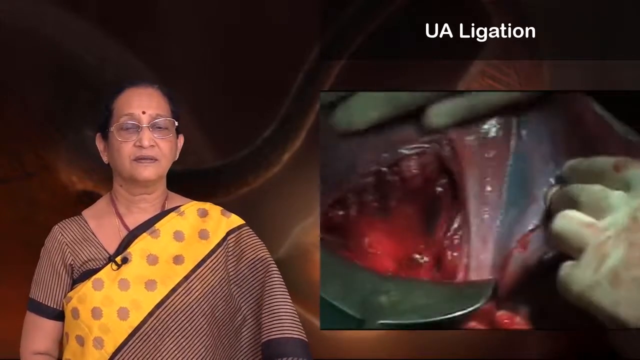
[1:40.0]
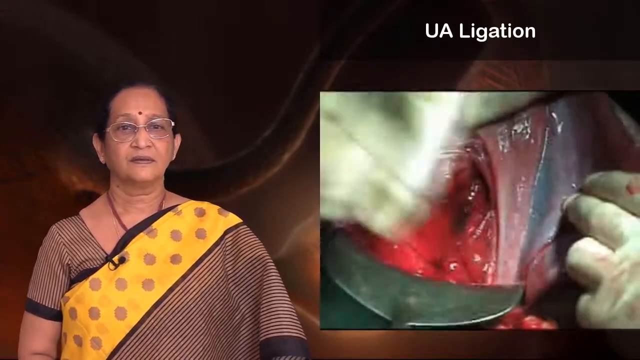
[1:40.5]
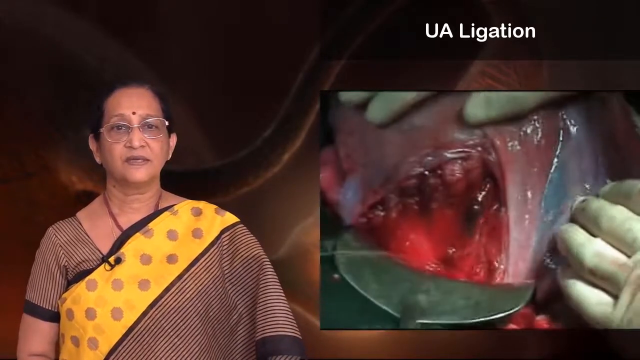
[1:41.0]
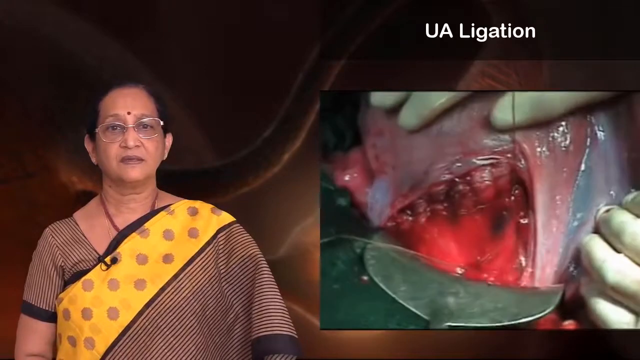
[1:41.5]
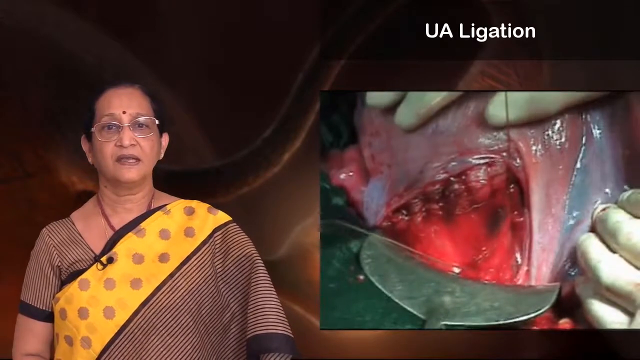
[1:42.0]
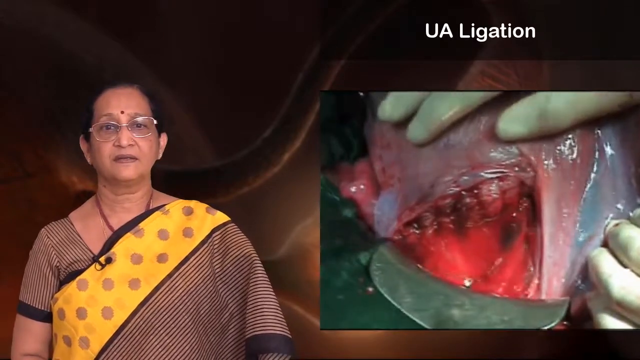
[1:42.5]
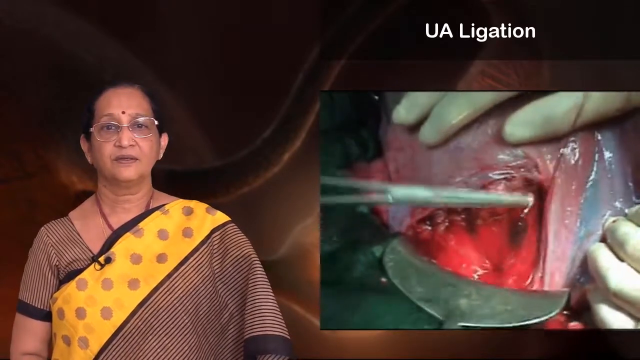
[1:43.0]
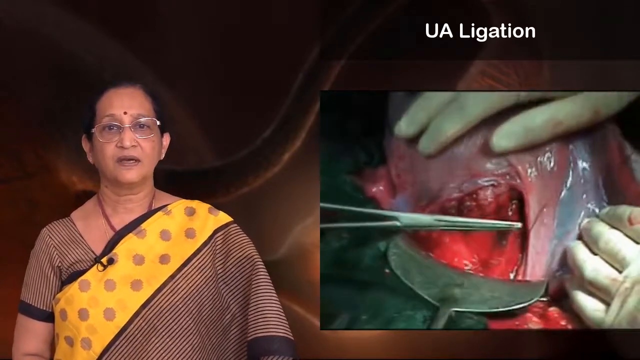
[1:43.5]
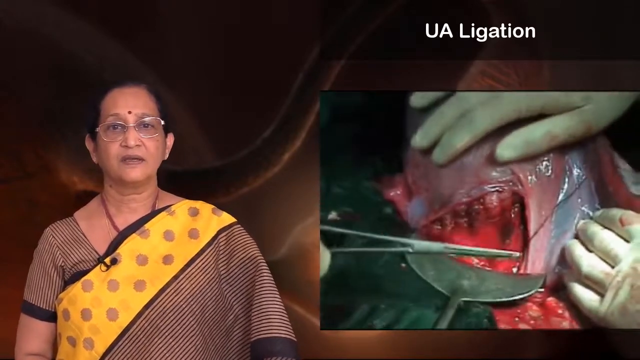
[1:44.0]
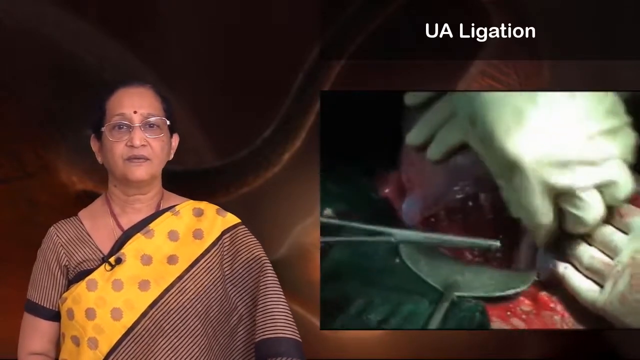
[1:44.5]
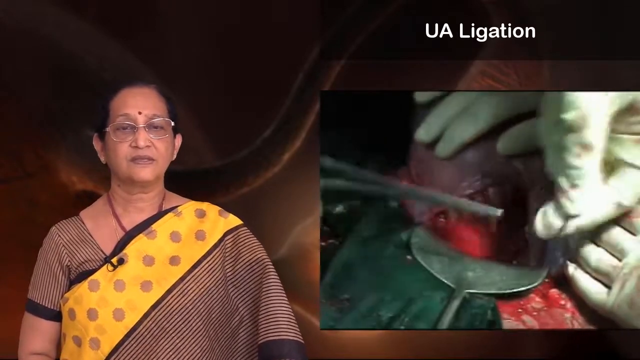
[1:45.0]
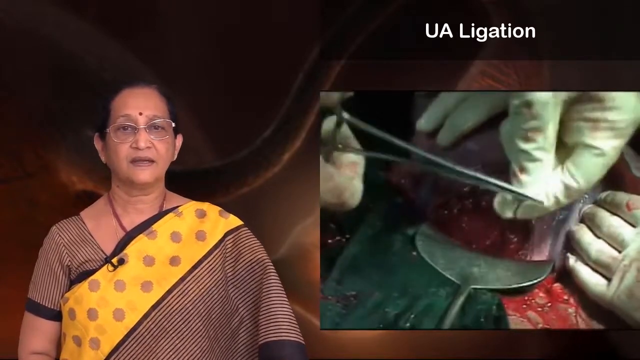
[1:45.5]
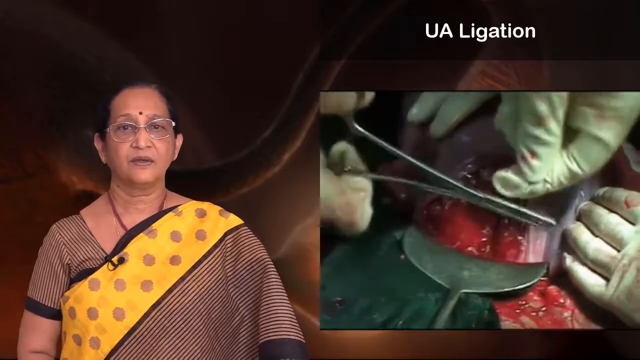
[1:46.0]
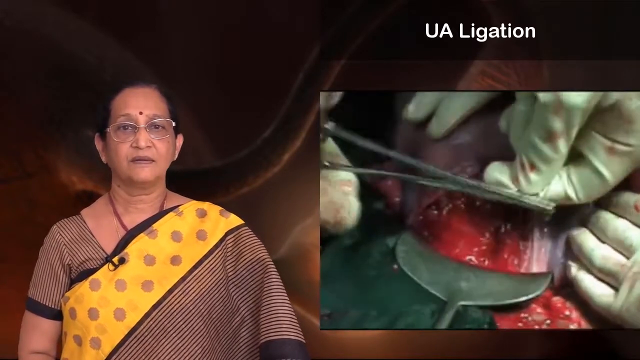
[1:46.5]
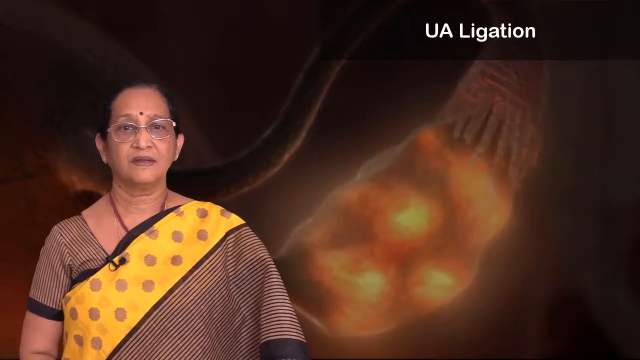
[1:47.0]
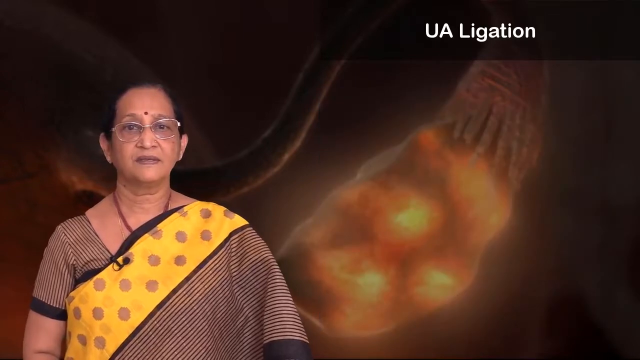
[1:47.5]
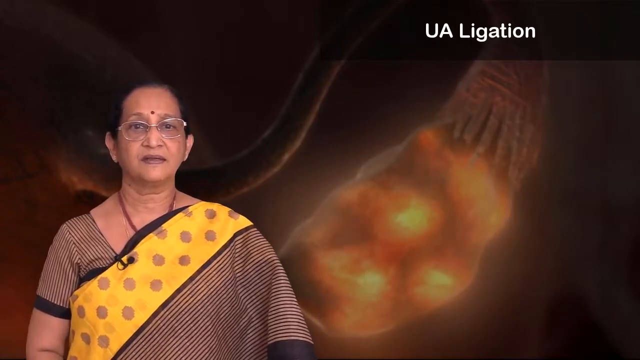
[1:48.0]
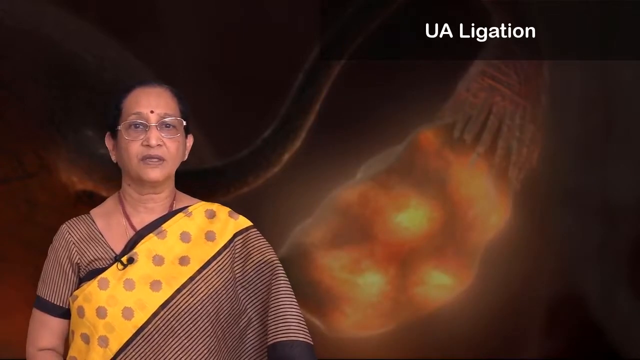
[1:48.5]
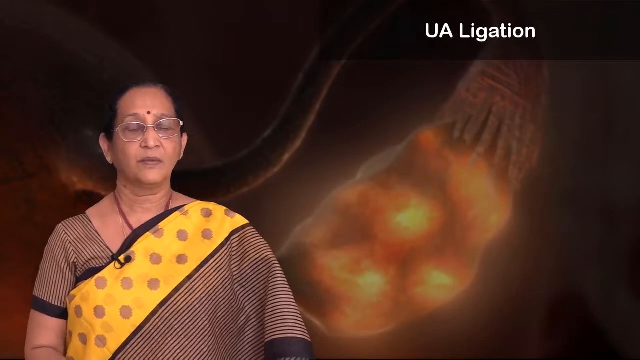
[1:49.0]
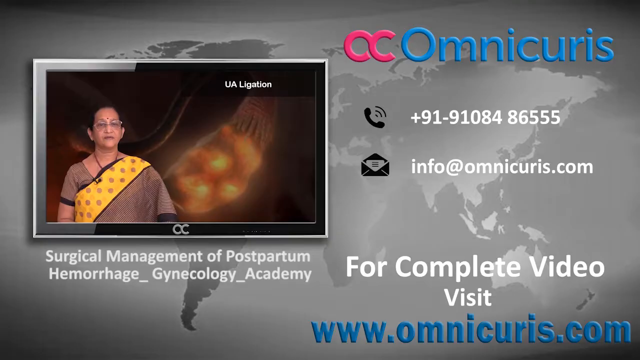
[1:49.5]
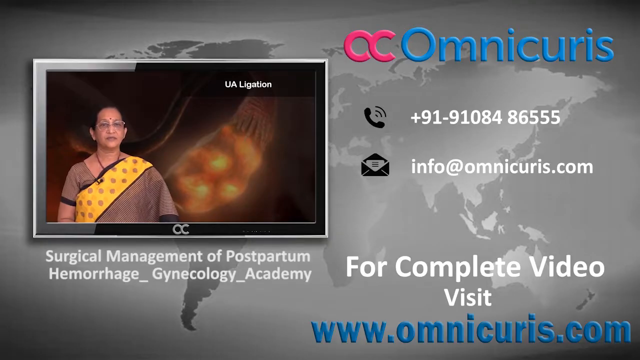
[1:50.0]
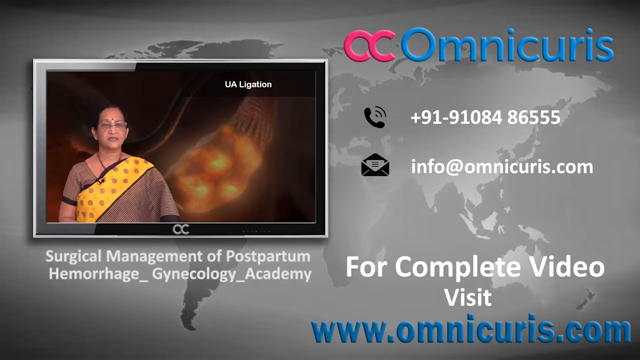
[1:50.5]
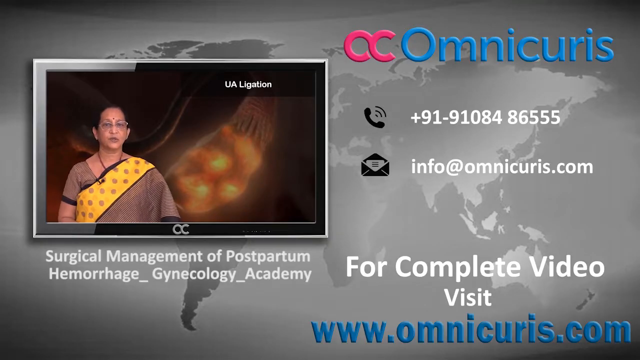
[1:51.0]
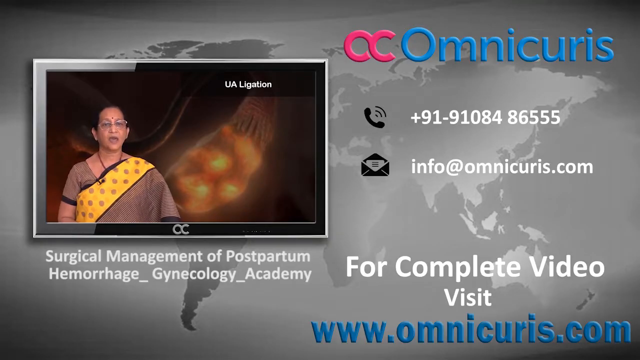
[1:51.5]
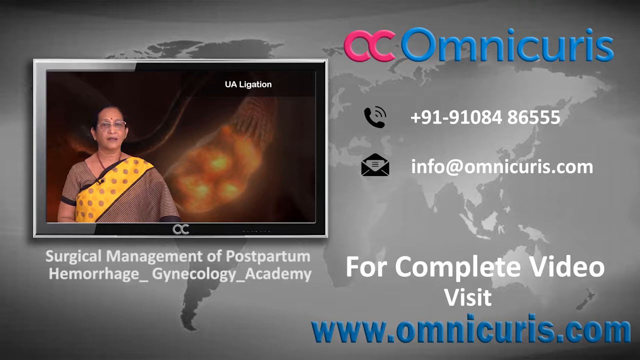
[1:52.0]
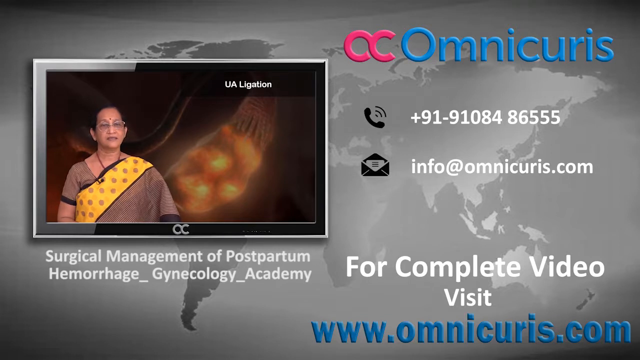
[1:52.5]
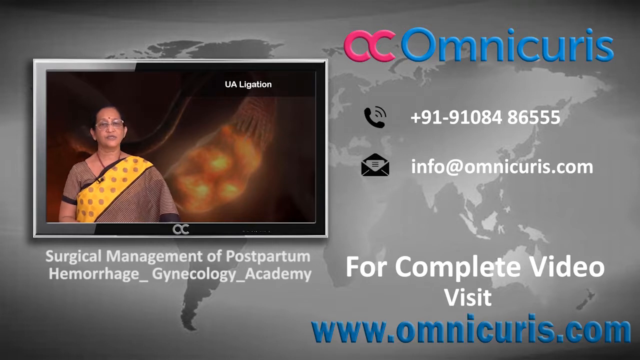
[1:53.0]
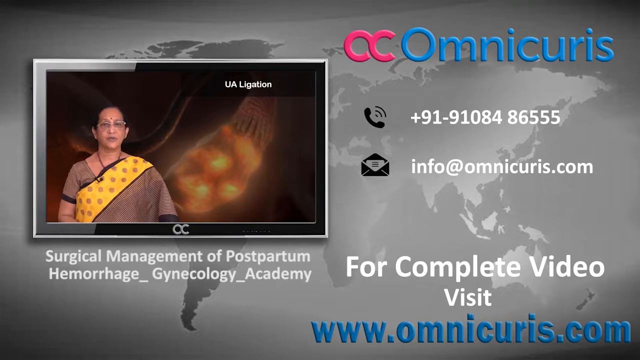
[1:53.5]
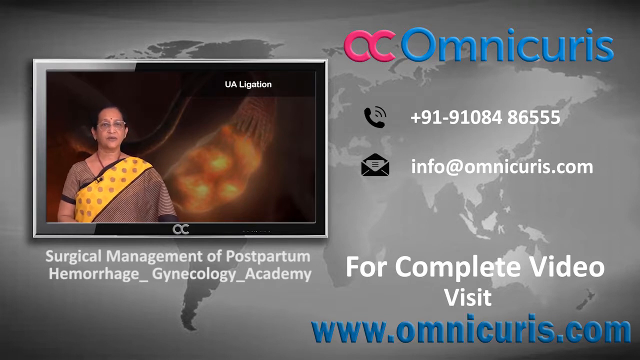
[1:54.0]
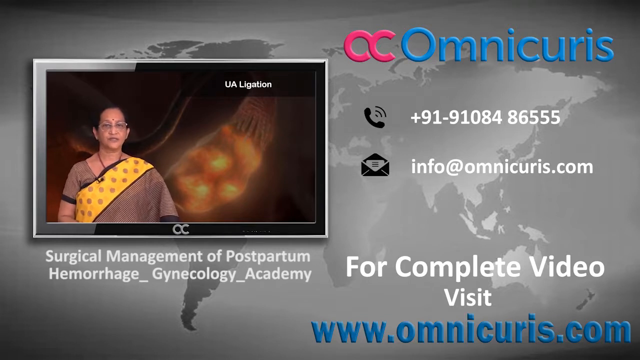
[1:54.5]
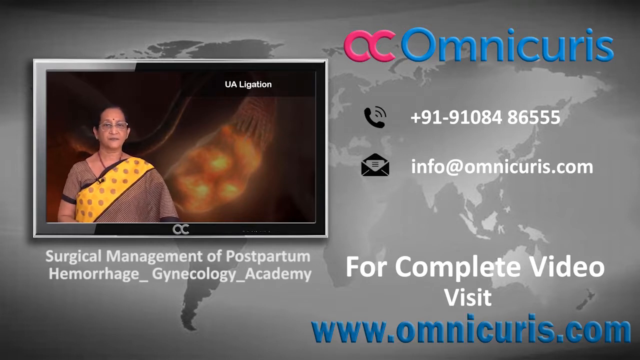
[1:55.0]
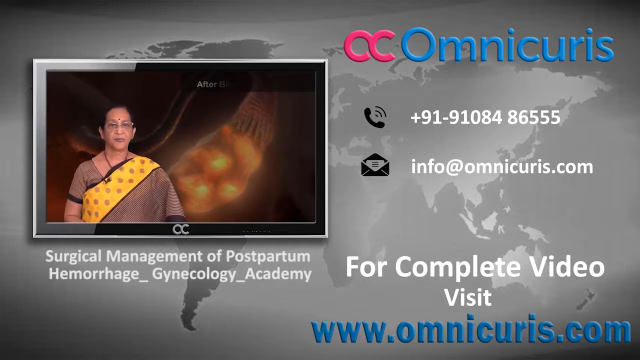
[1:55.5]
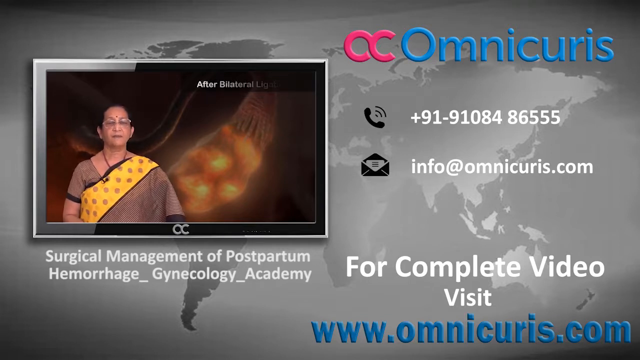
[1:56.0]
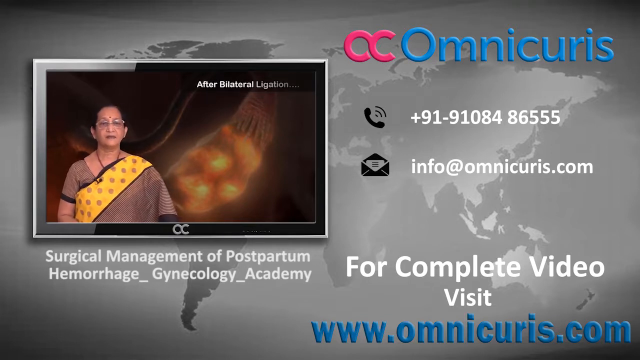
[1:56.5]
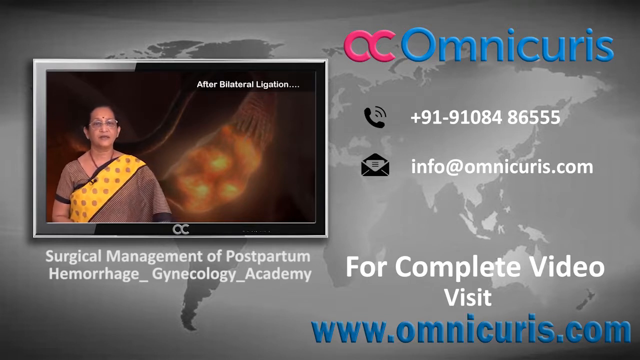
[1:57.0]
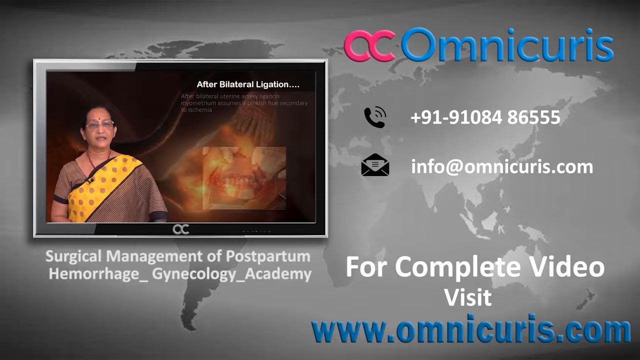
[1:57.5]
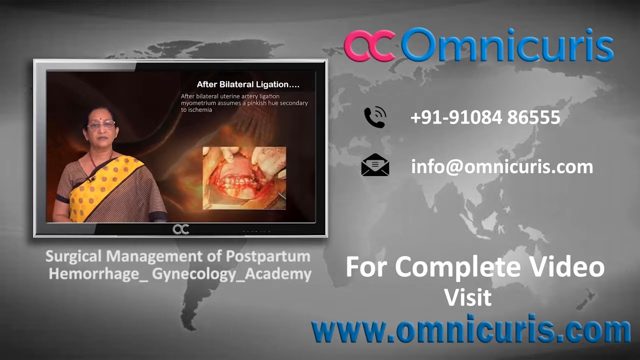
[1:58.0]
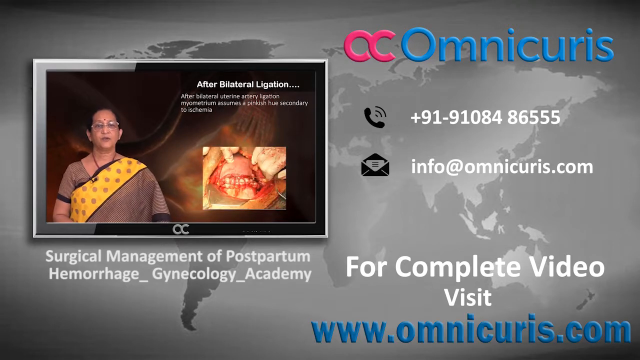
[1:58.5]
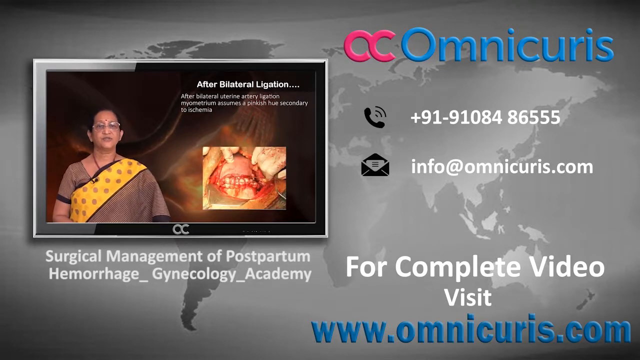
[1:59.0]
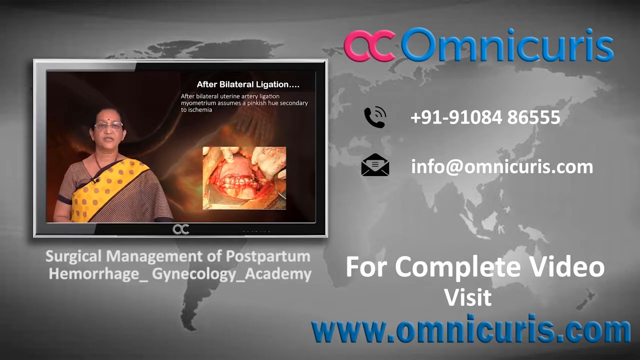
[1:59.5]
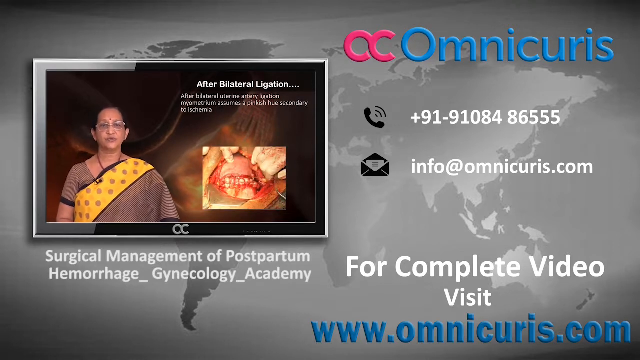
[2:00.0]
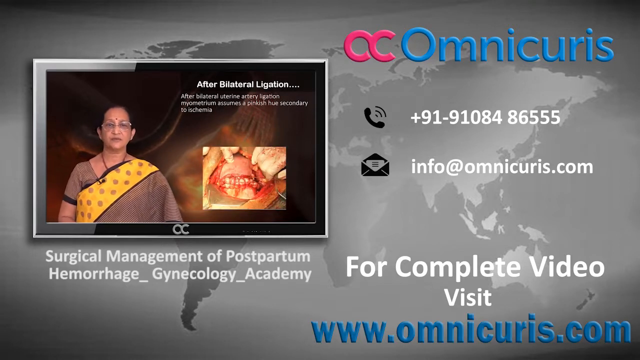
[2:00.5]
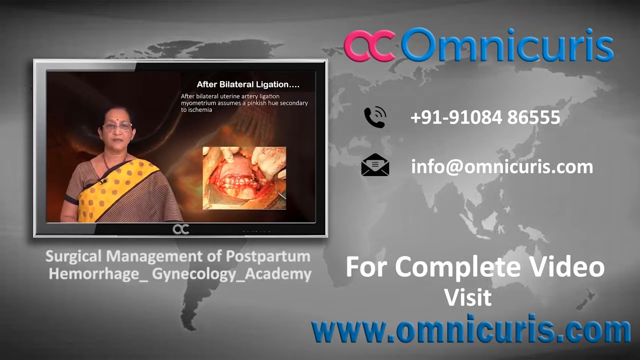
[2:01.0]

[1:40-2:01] The picture-in-picture clip at the bottom right continues to show somebody performing the surgery, with the wires used to sew things together and surgical grippers being manipulated. The clip then goes away, leaving the woman talking on the left side of the screen. The screen changes so that she is in a small TV screen, with a gray map of the world as the background. In the corner is a logo: a pink OC where the O curls into the C, followed by blue words reading "Omnicurus". Beneath it are a telephone icon and the number "+91-910-848-6555", and beneath that an email icon and the address "info@Omnicurus.com", both in white. Near the bottom, in white text, it reads "for complete video, visit www.Omnicurus.com", and to the left of that, underneath the picture-in-picture screen, it reads "Surgical Management of Postpartum Hemorrhage_Gynecology_Academy". The woman continues to speak on the TV screen throughout this contact-information slide. Another slide then appears with the title "After Bilateral Ligation" and beneath it the text "After Bilateral Uterine Artery Ligation, Myometrium assumes a pinkish hue secondary to ischemia", along with an image of the inside of somebody's body with surgical hands. The video ends there.